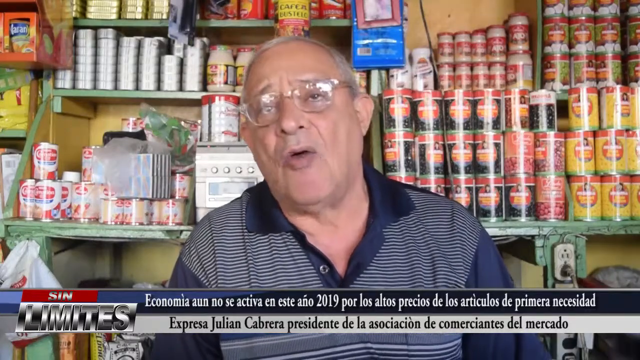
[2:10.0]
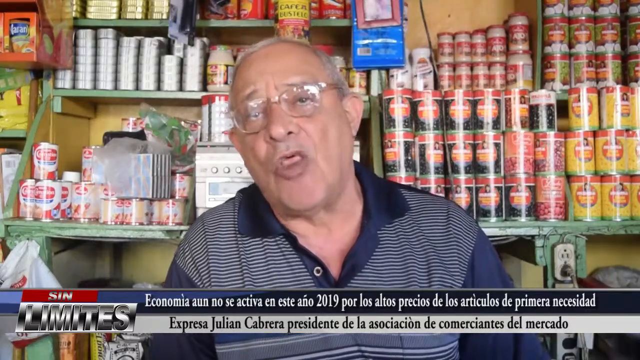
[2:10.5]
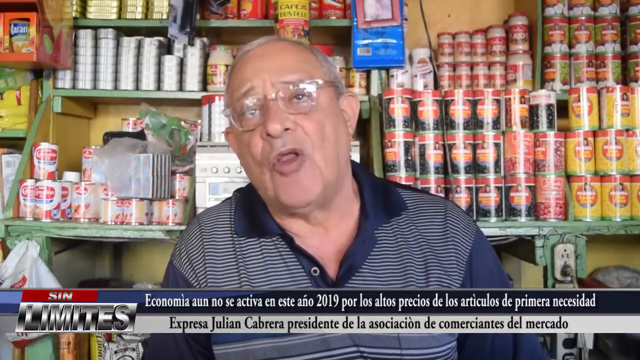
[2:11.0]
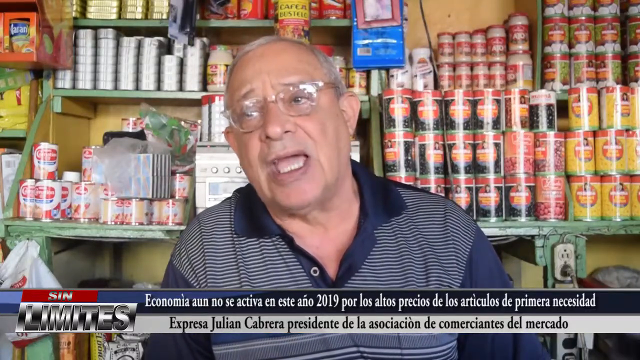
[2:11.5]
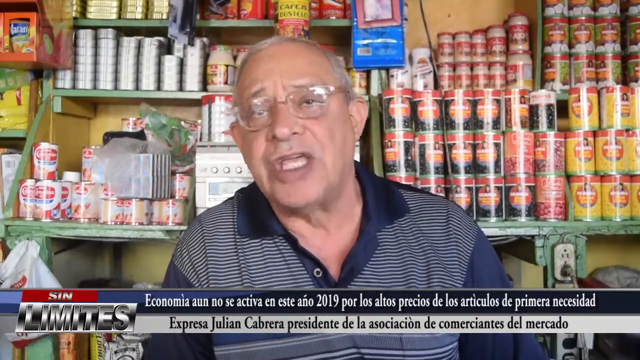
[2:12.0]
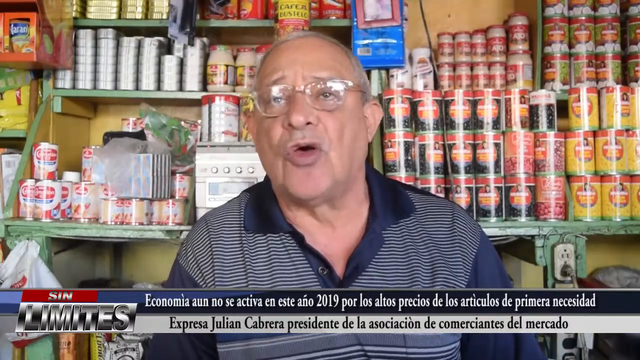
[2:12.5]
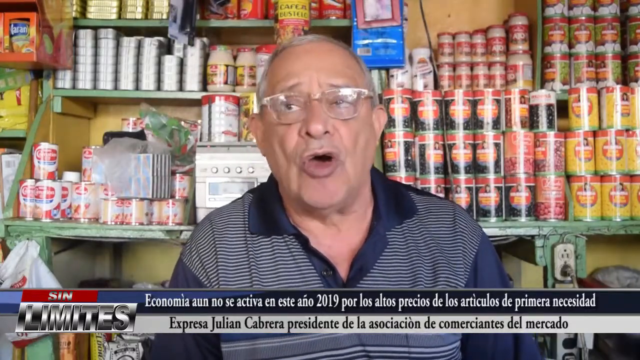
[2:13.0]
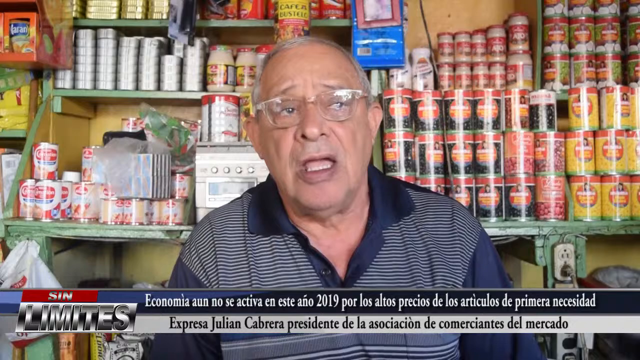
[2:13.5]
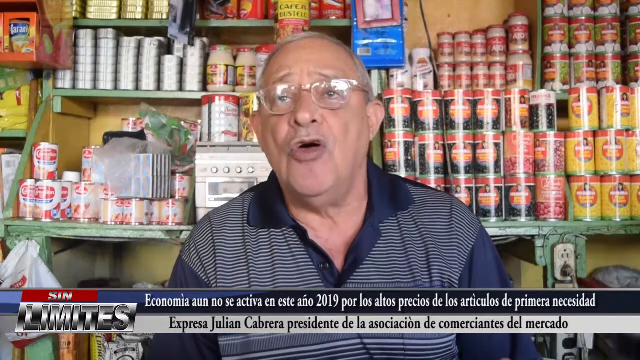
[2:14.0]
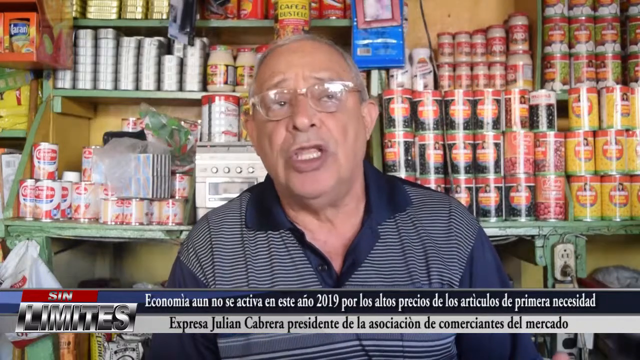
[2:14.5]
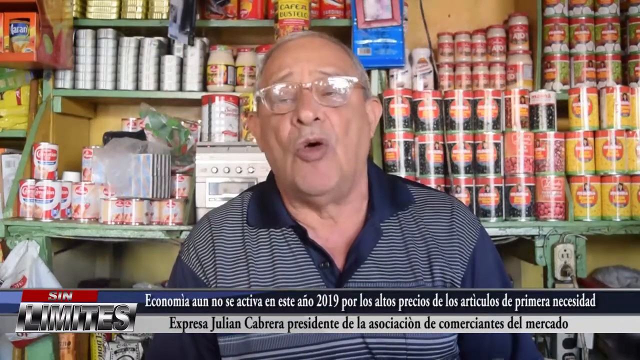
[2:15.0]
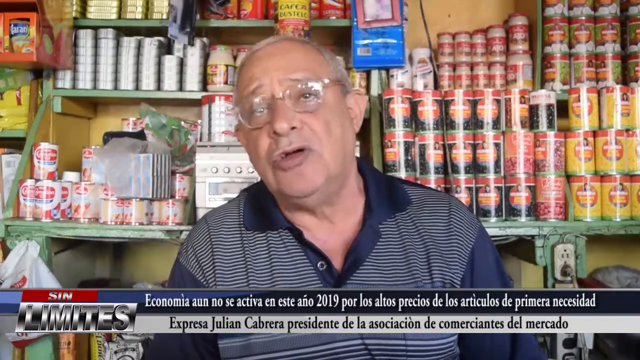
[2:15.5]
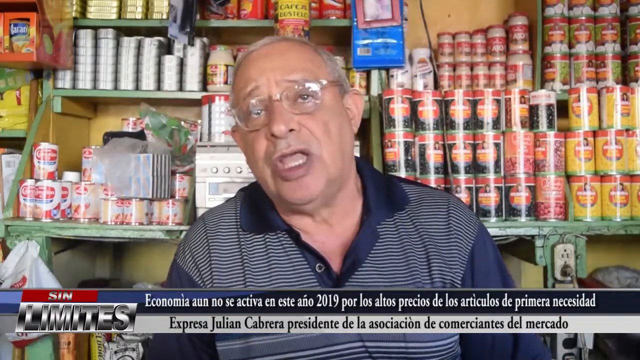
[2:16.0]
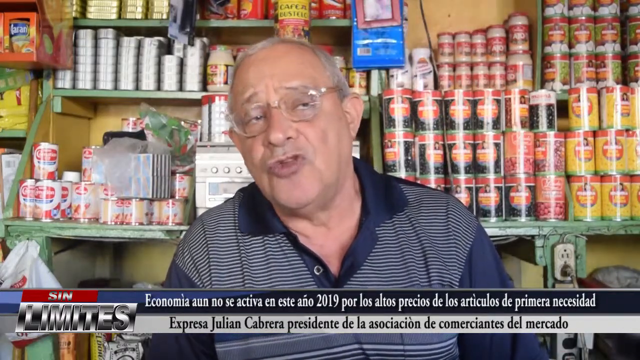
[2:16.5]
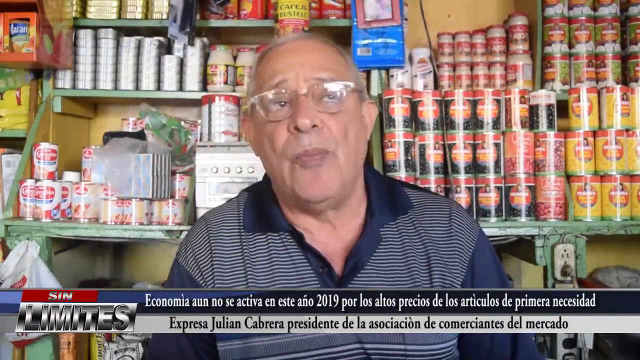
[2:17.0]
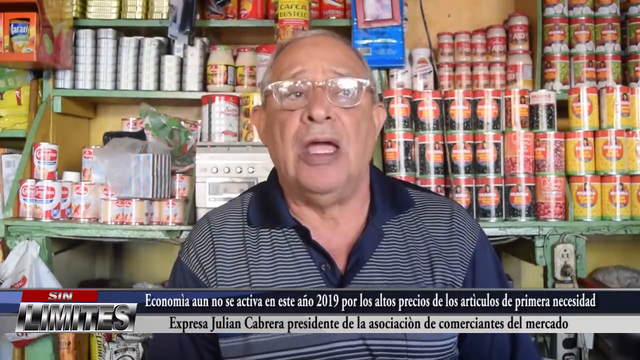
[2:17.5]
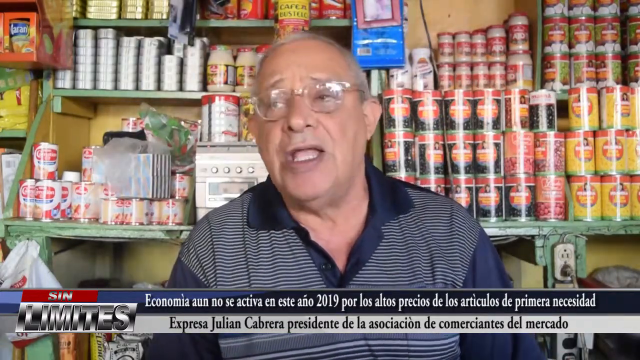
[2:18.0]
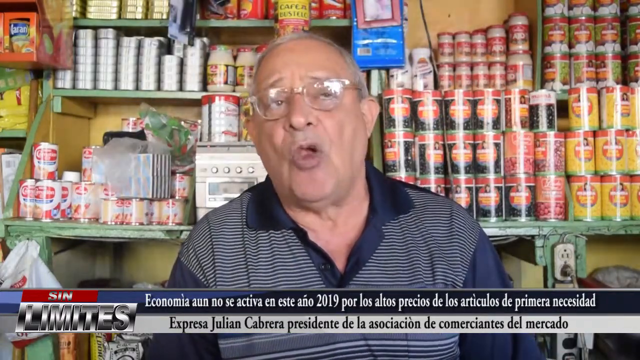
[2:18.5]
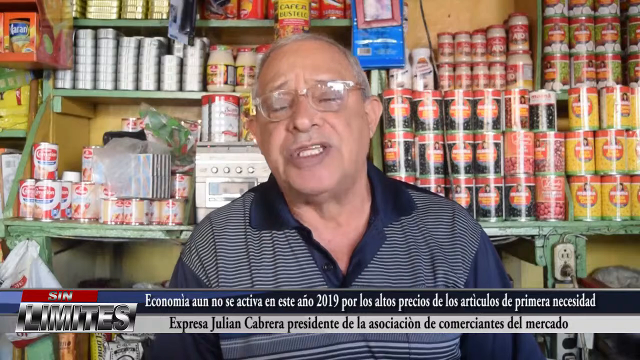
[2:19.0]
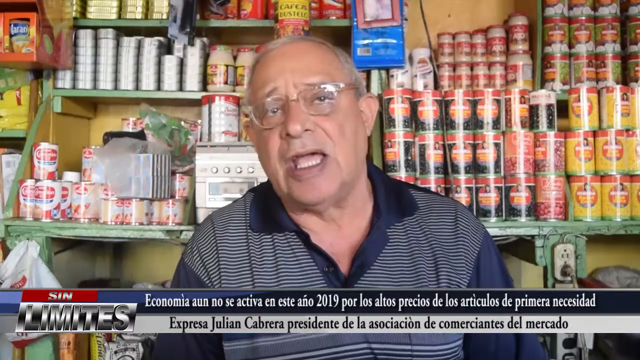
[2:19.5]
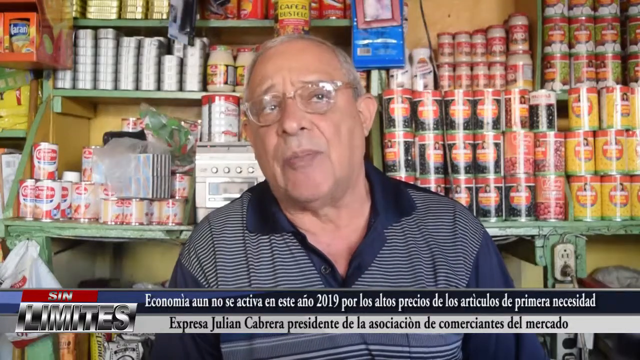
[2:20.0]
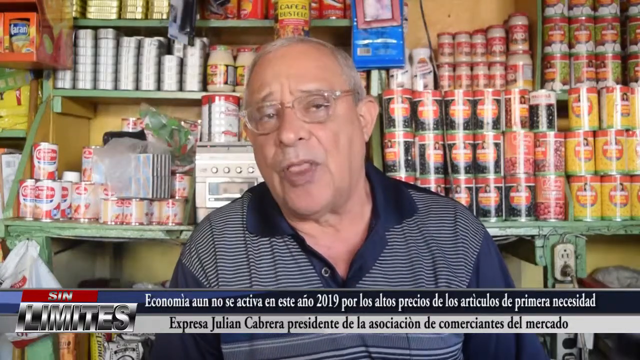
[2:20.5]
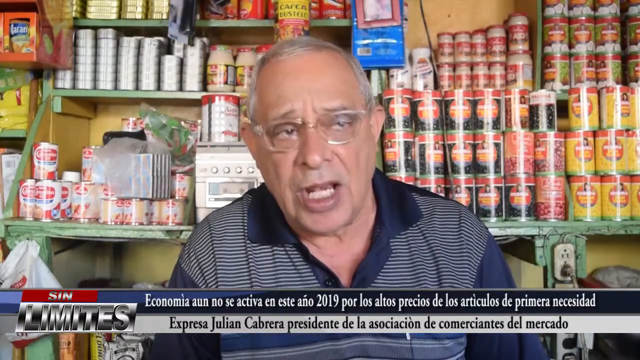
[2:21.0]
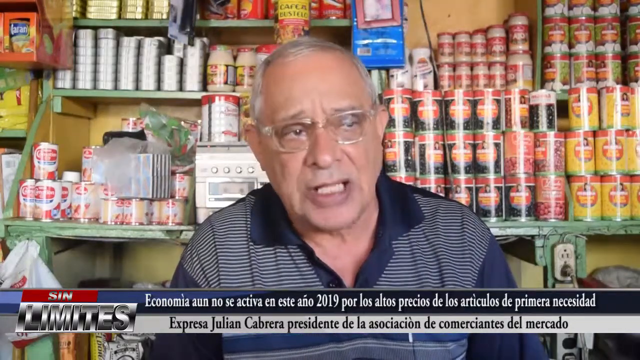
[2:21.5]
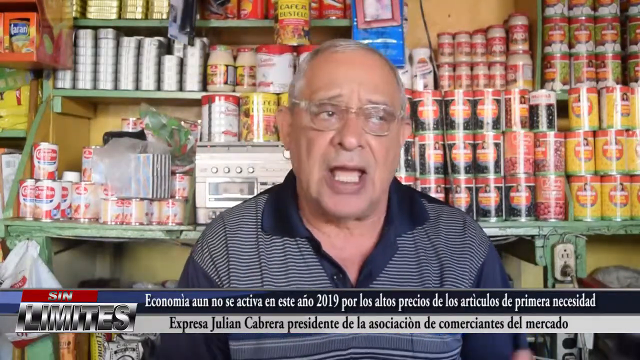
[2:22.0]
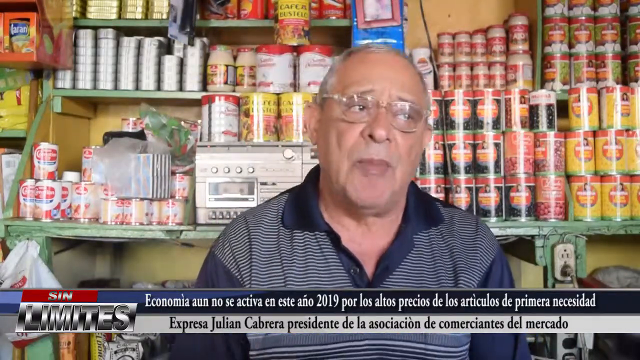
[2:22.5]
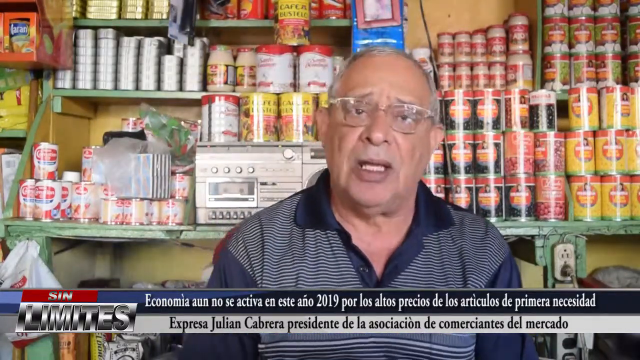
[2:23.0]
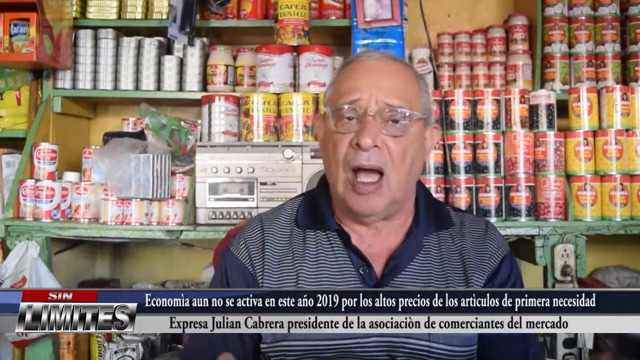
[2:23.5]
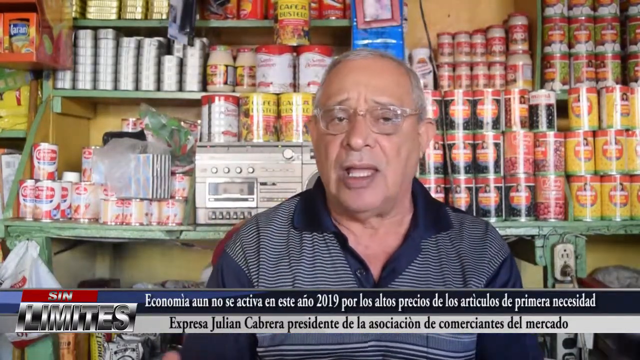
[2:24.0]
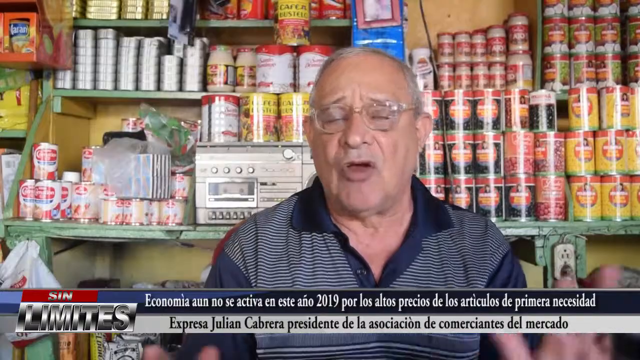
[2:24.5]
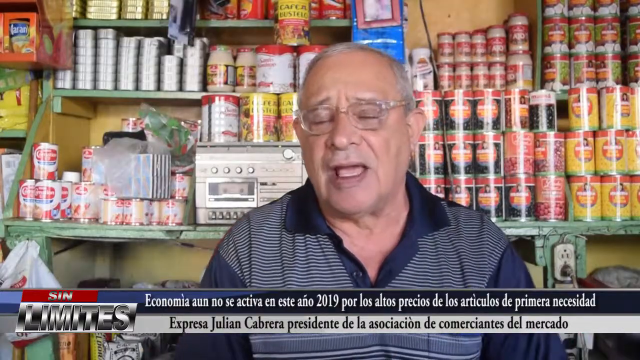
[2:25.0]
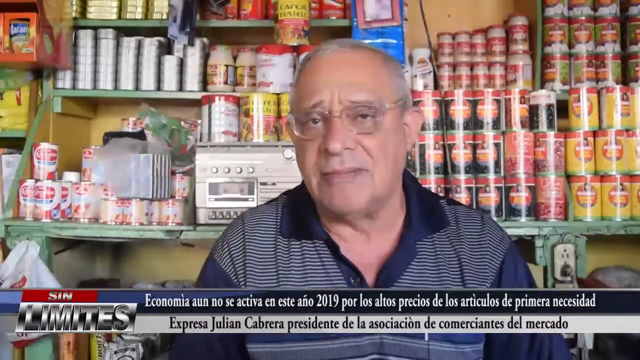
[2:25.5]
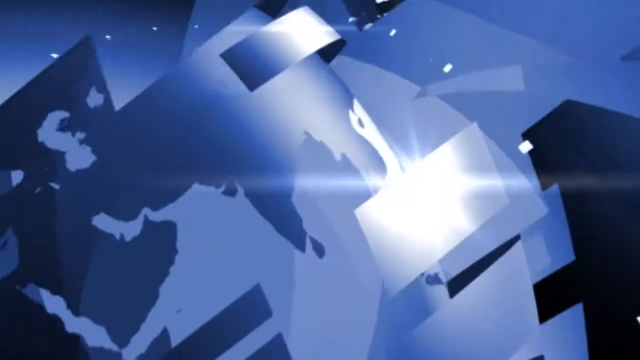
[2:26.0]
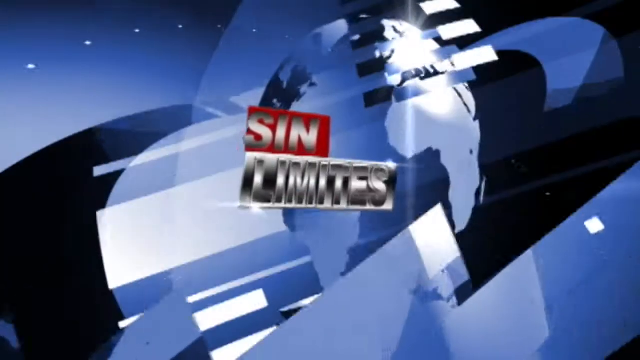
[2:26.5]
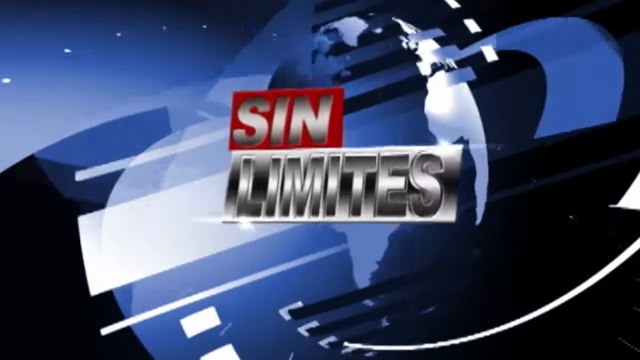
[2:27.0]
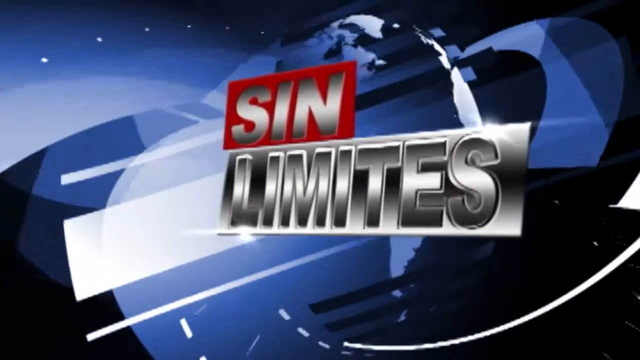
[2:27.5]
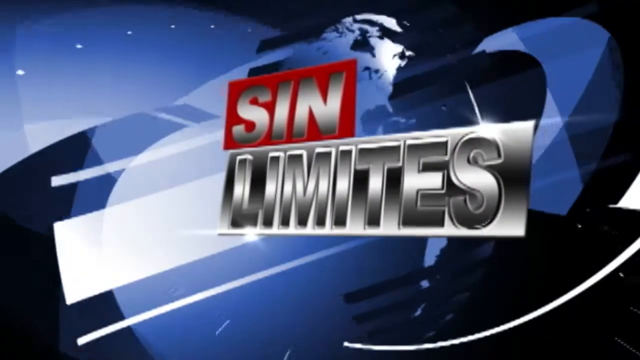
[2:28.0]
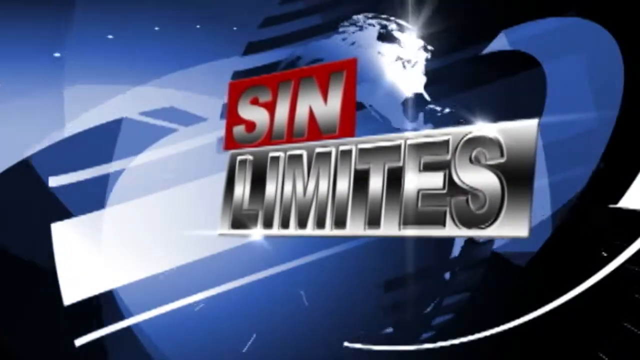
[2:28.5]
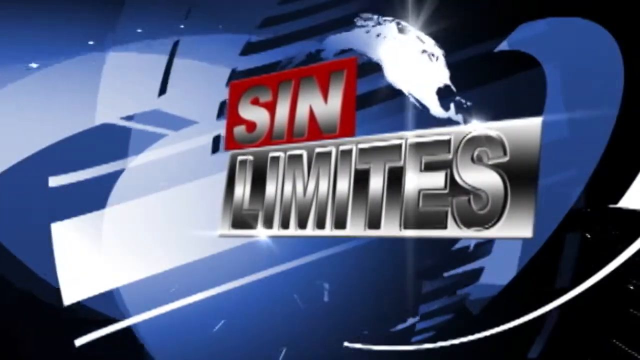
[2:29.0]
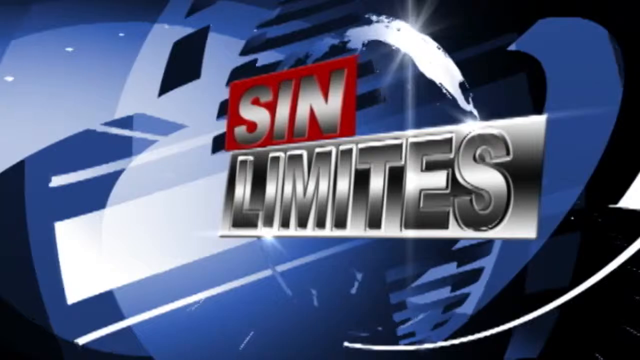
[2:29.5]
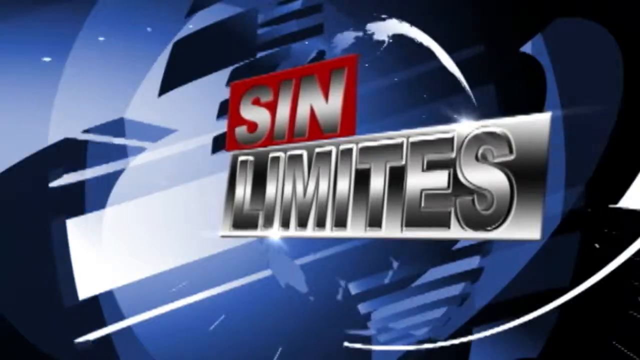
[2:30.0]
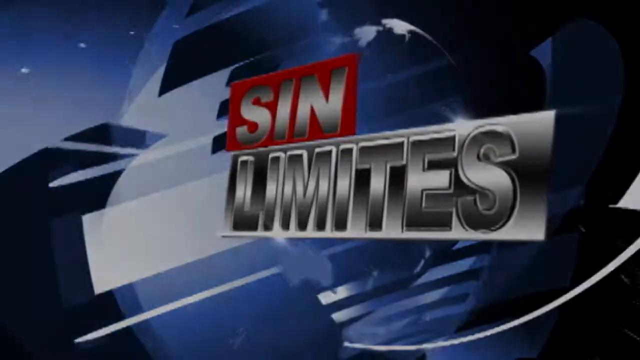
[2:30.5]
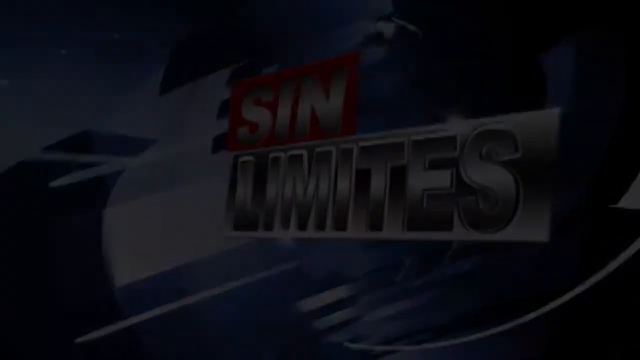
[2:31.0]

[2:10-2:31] A man who appears to own or work in a store is interviewed, with canned goods and a radio behind his head. Non-English words then appear in the middle of the screen: the word "sin" in gray capital letters on a red rectangle, and right below it a word that apparently reads "limits", in gray letters on a shiny gray background. Blue colors move in the background, and then the video cuts to a fully black, blank screen.